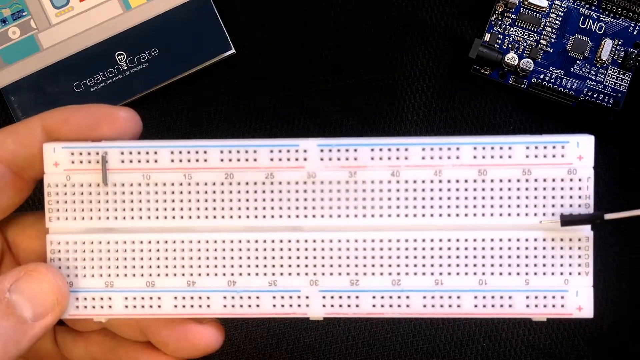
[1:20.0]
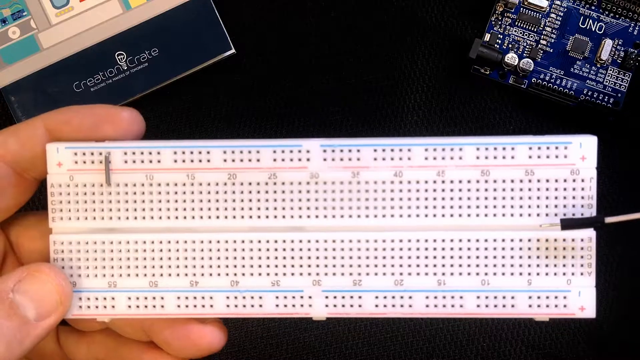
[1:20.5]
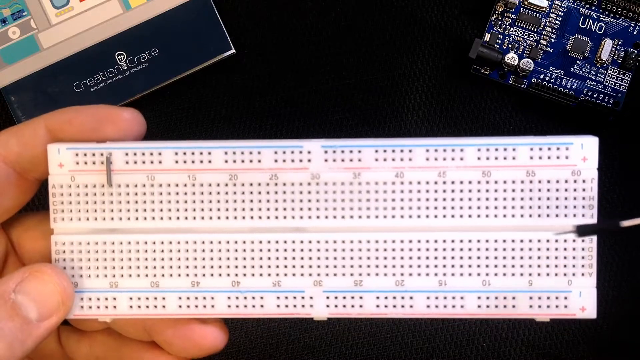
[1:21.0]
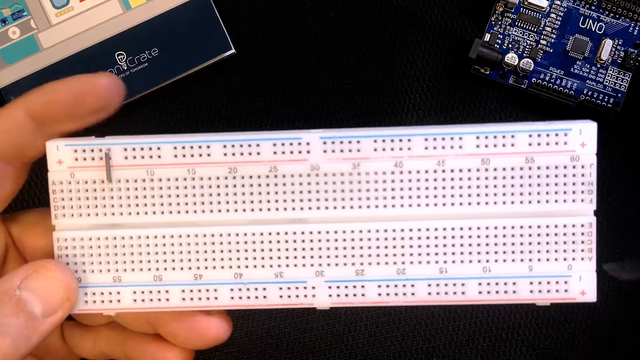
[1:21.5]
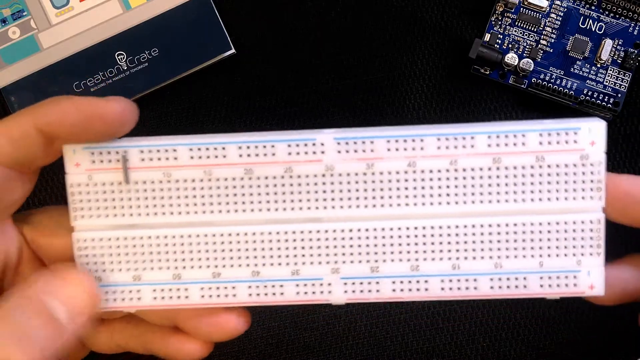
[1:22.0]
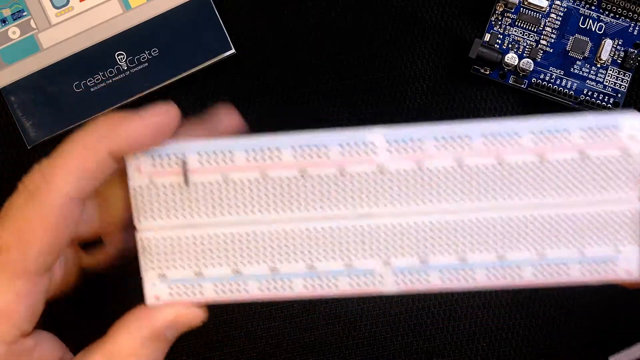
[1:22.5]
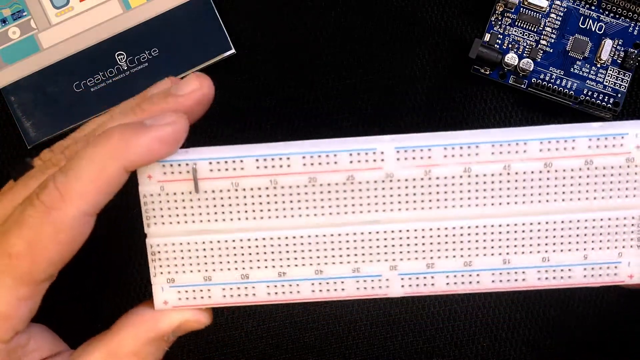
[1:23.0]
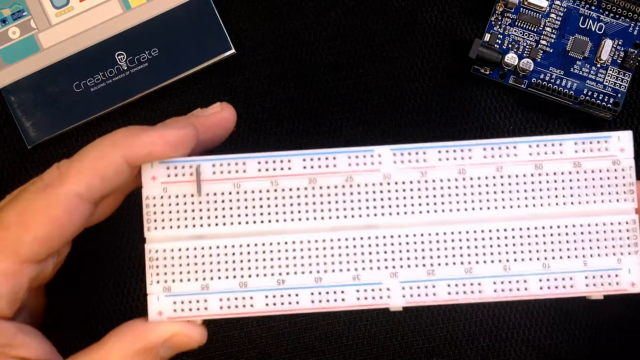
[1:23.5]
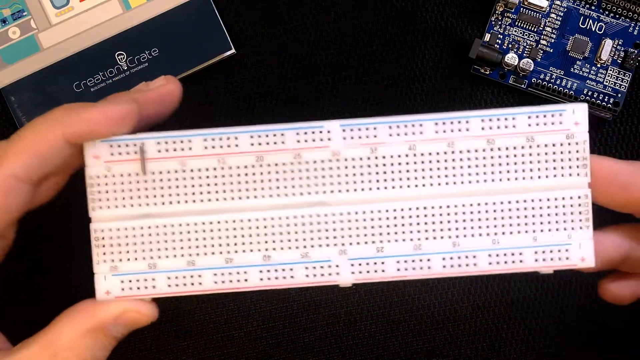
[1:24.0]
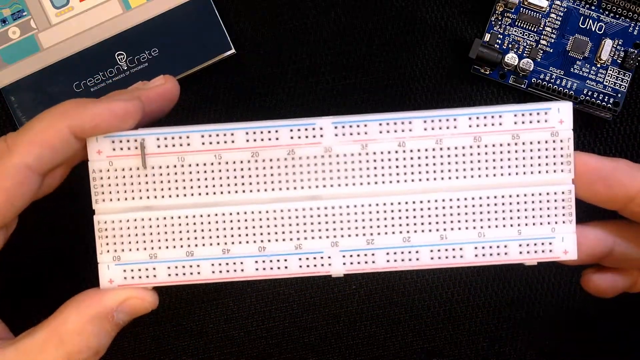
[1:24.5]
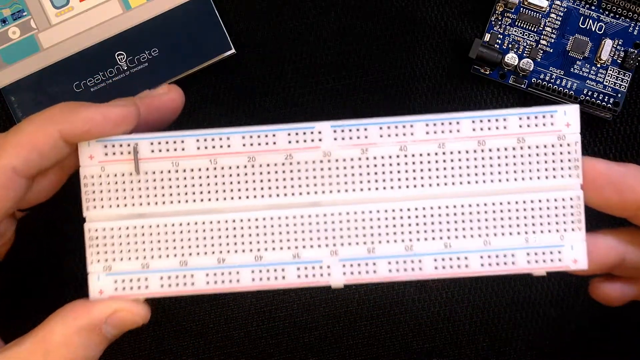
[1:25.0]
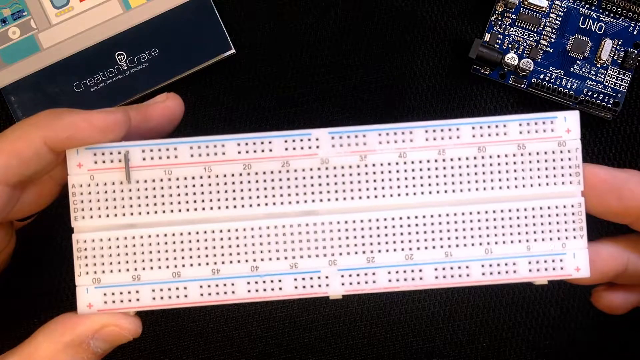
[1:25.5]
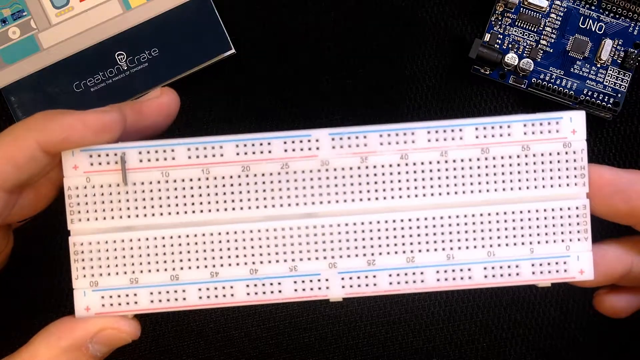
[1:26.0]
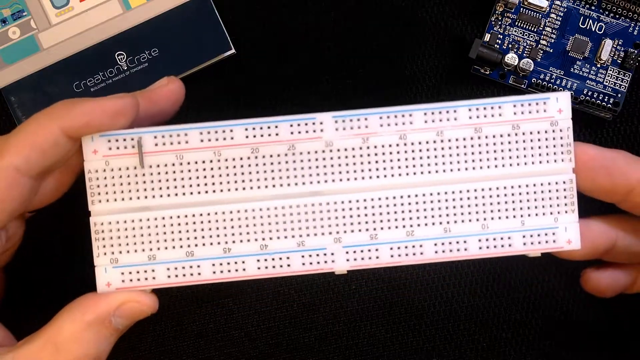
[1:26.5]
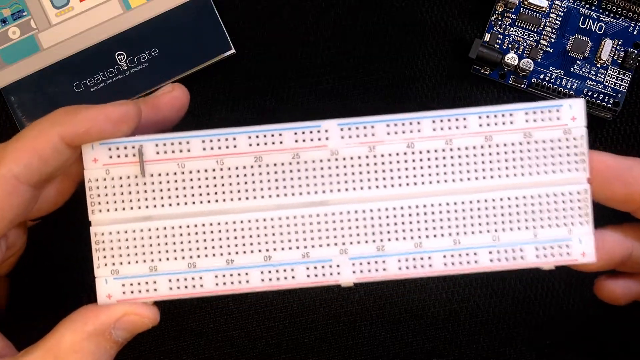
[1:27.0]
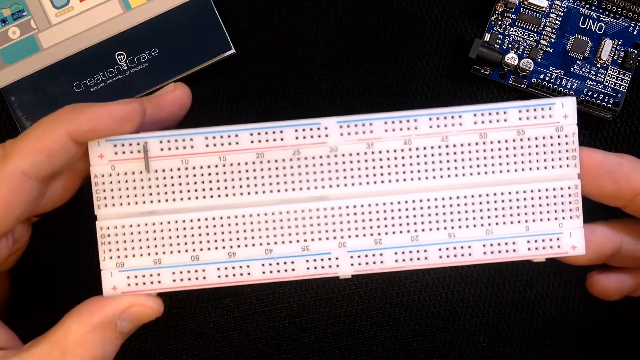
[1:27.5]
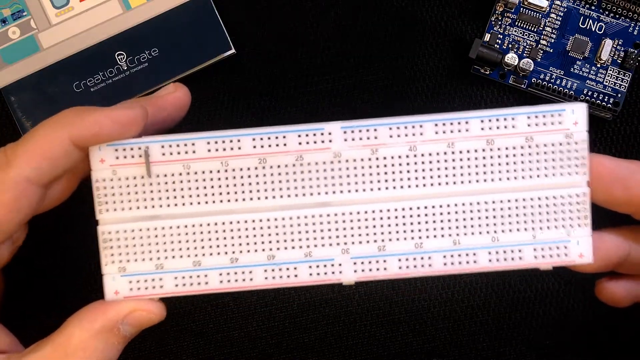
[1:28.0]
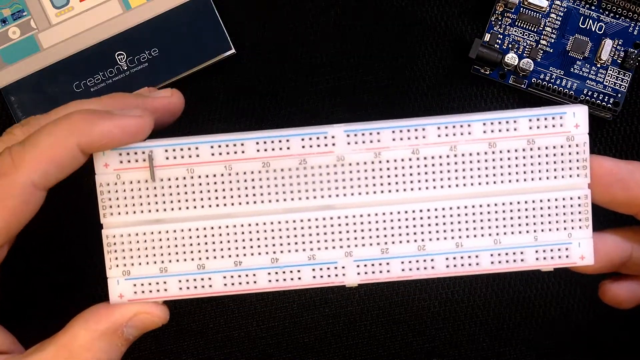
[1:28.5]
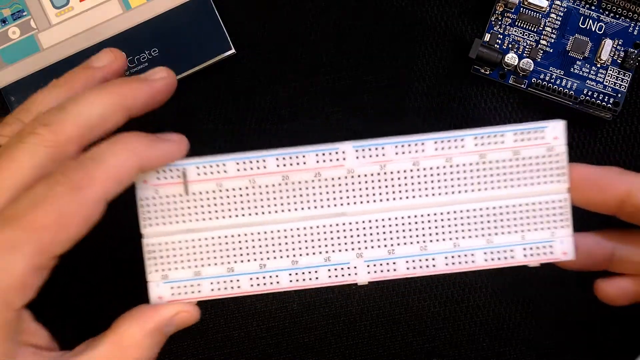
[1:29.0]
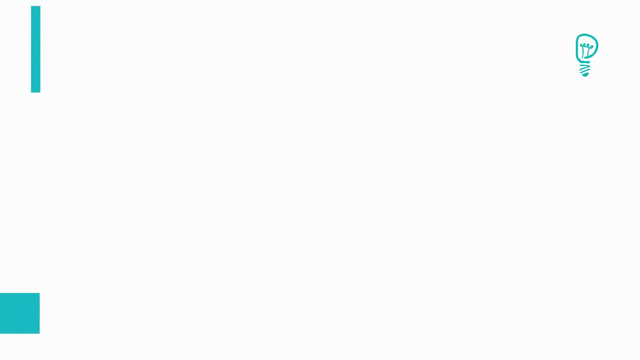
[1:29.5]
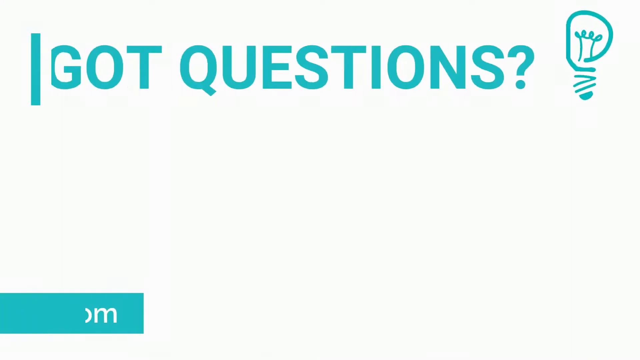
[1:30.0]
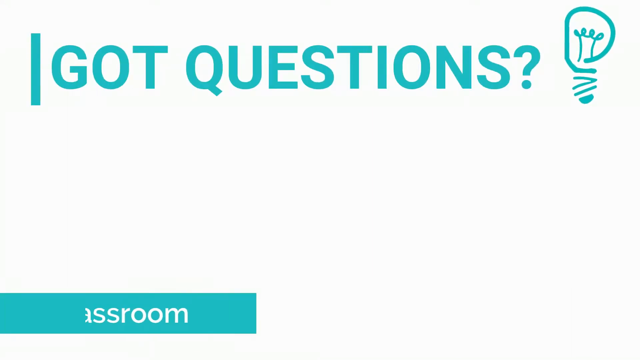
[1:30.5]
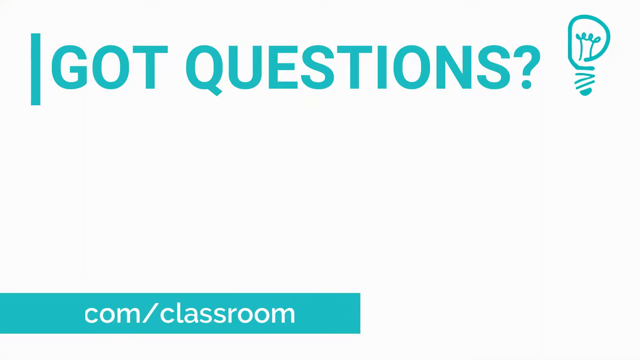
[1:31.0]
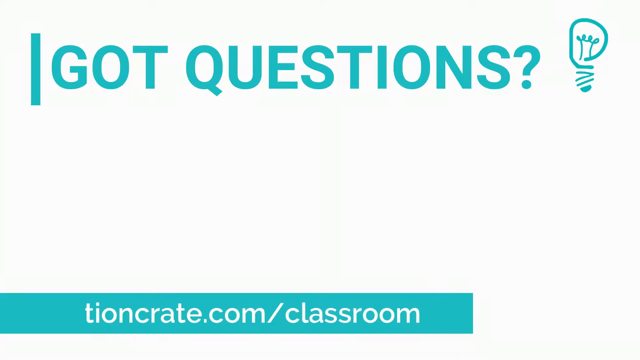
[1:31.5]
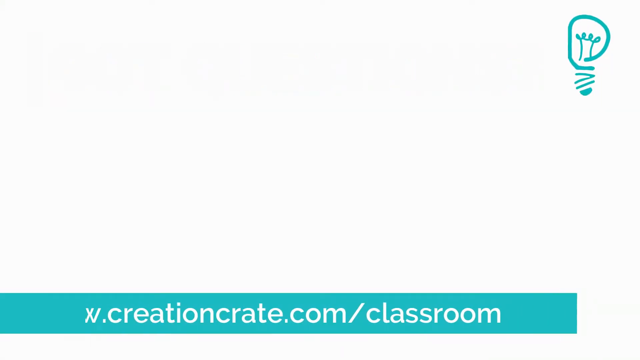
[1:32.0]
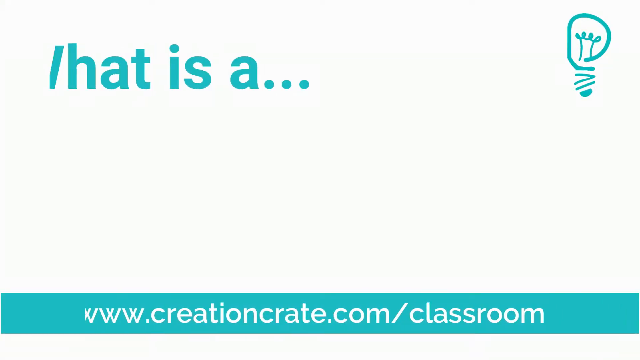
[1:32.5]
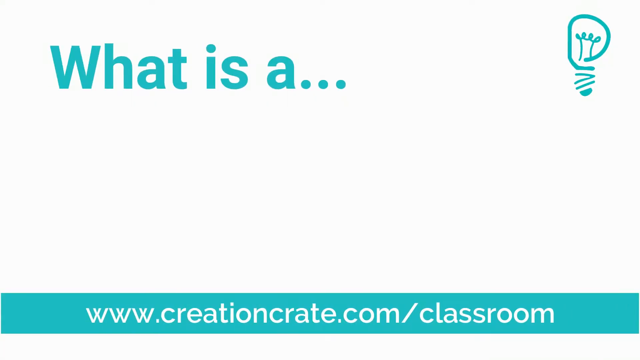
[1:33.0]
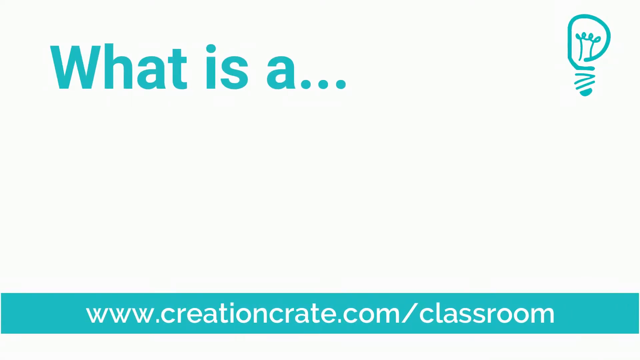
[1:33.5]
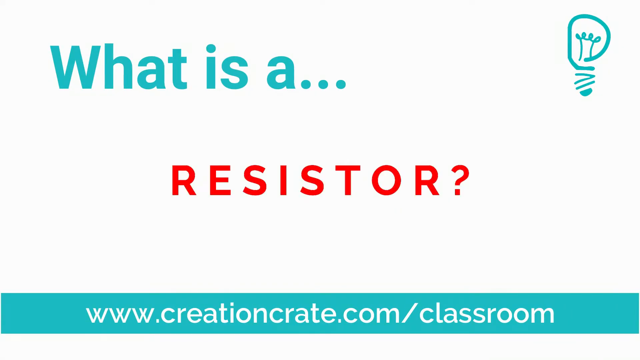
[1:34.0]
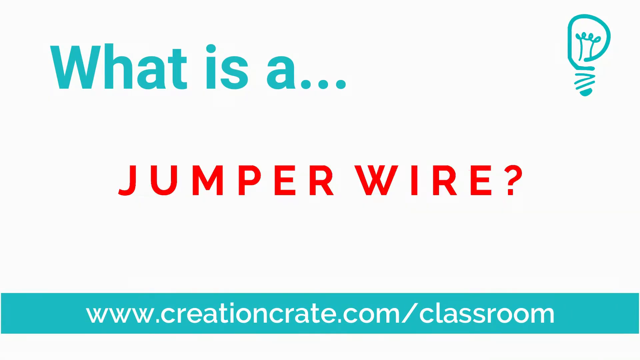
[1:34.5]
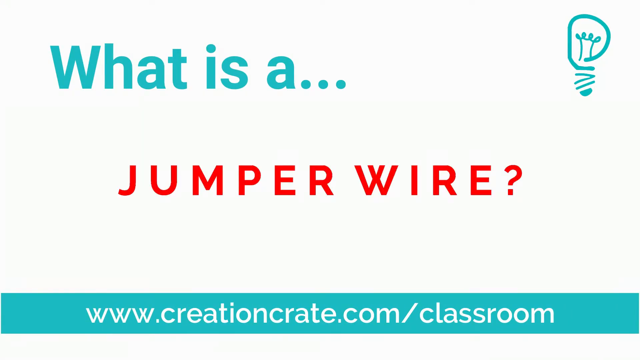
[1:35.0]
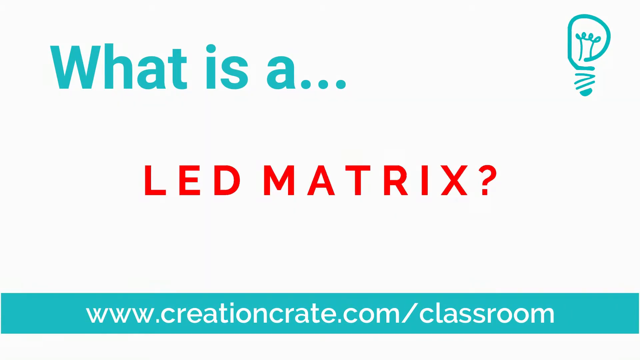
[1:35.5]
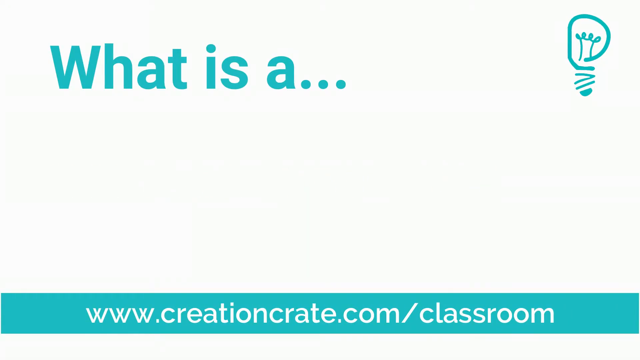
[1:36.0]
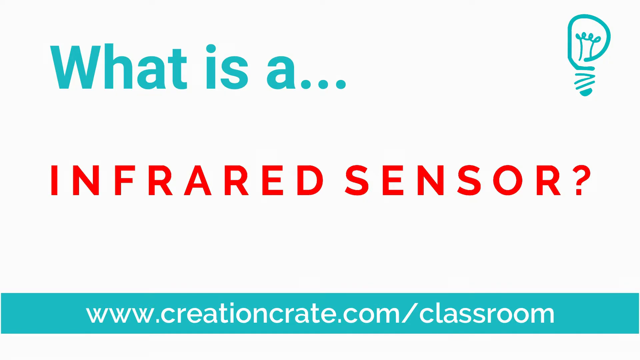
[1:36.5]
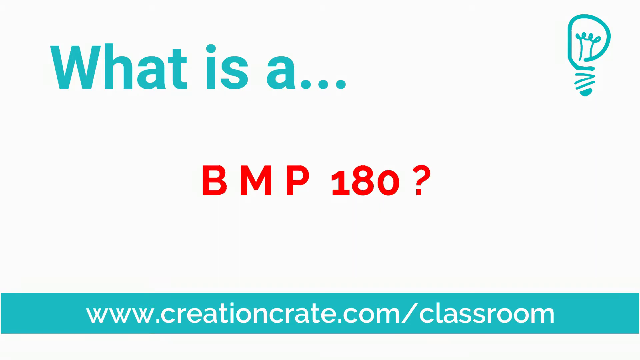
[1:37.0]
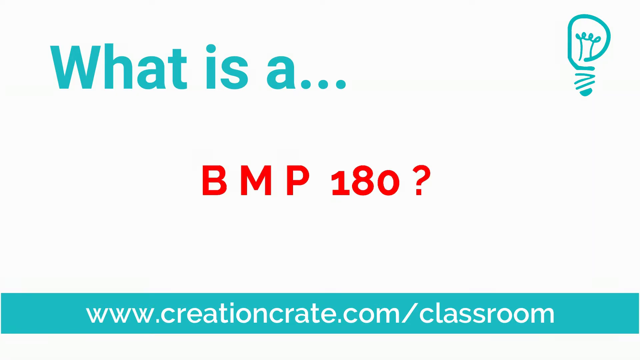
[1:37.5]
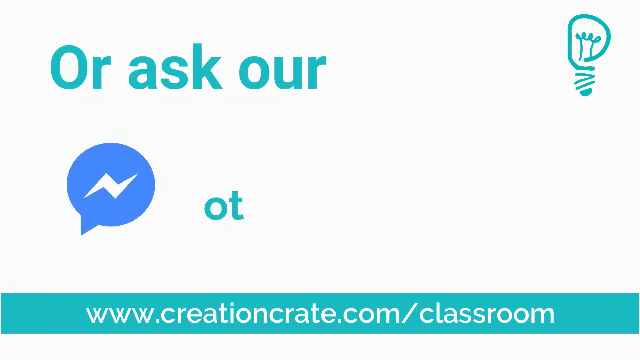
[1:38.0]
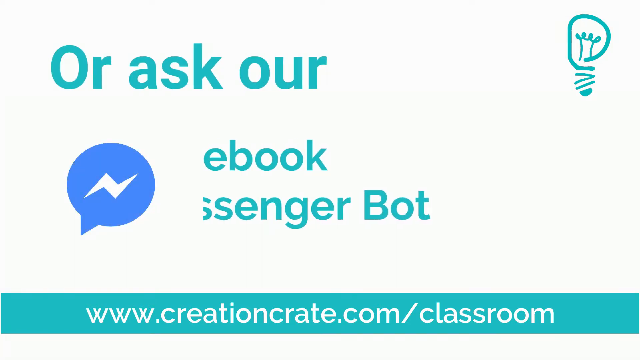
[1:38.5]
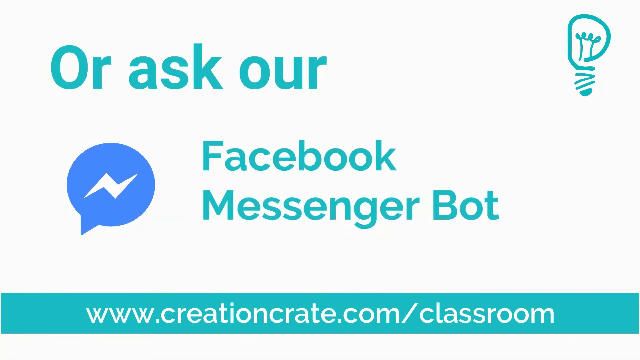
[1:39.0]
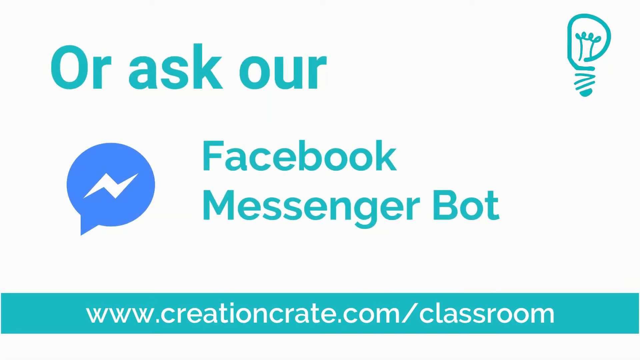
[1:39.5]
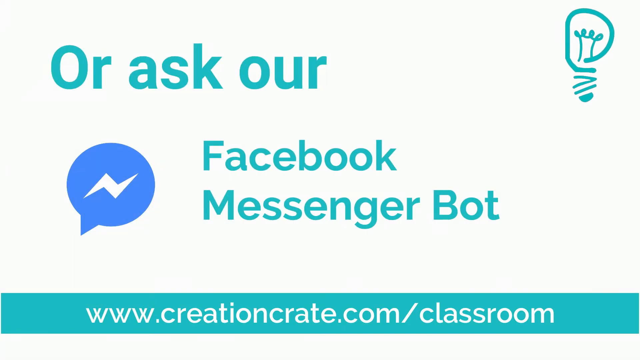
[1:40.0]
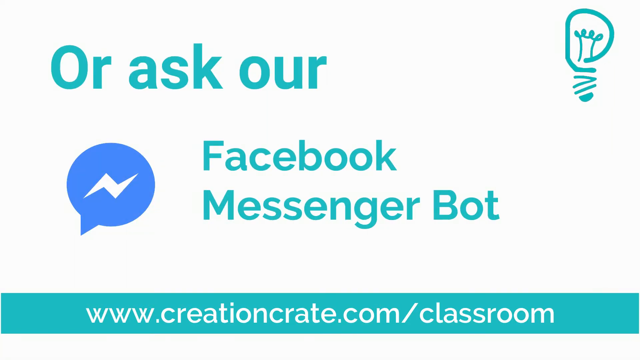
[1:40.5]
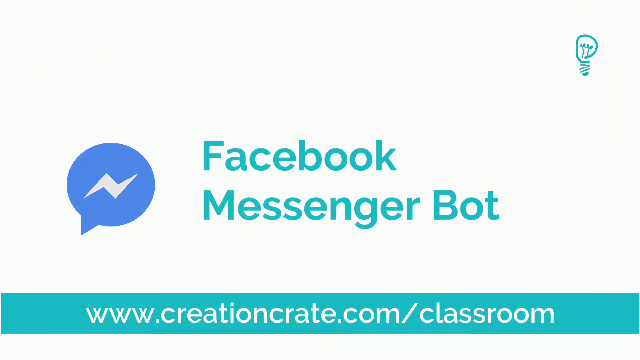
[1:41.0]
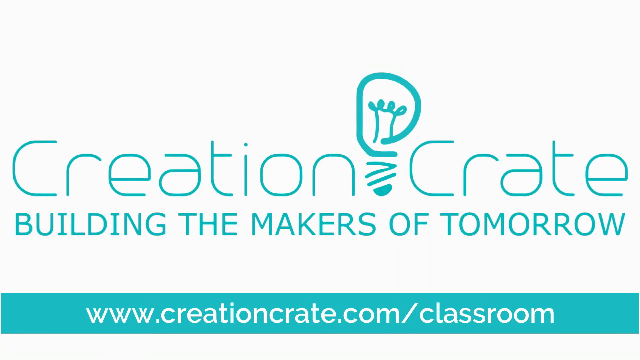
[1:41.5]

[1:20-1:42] The breadboard is shown with its horizontal and vertical connections: the thin blue line indicates negative and the red line indicates positive, and the connection is taken from the positive or negative sides into the vertical or horizontal sections to power the breadboard. The breadboard is on a dark object, with another panel in the top right corner of the screen and a label in the top left corner. An advert then appears reading "what is a resistor", "what is a jumper wire", "what is led matrix" and "what is infrared", plus an item about bmp 180, and mentions asking a question via Facebook Messenger bots for more details. It ends with "creation creates building the makers of tomorrow components video series".